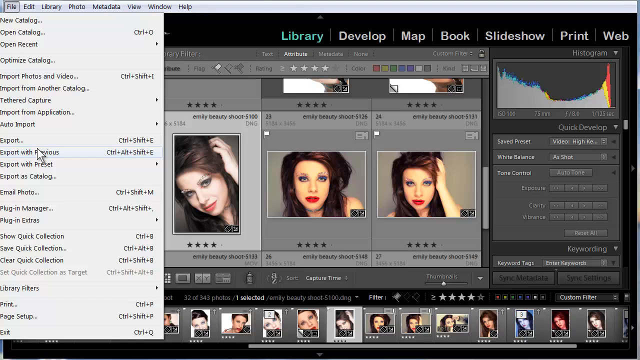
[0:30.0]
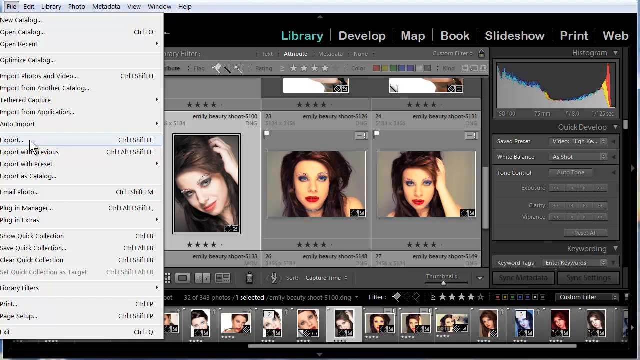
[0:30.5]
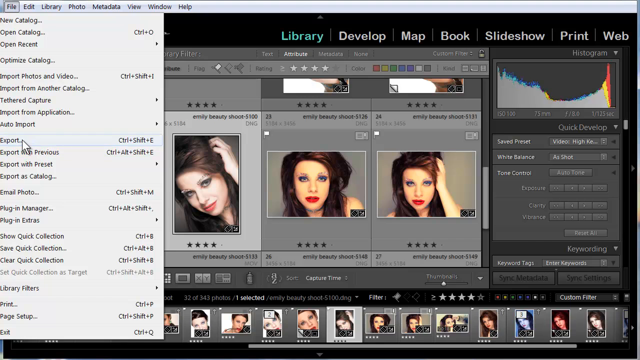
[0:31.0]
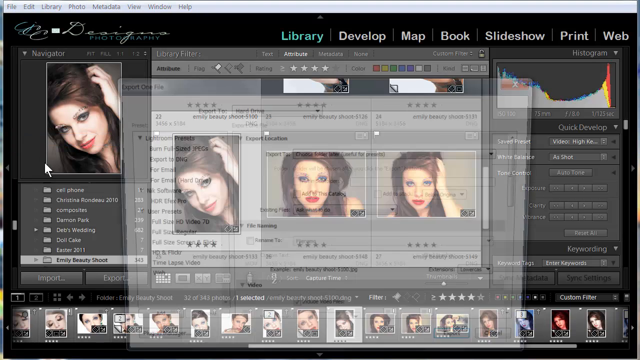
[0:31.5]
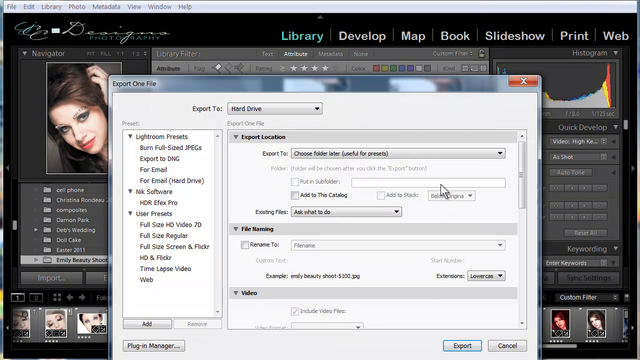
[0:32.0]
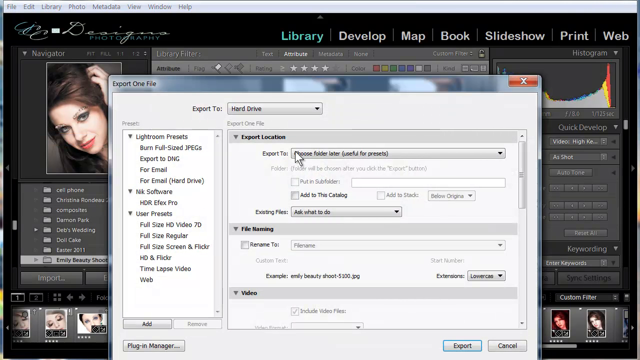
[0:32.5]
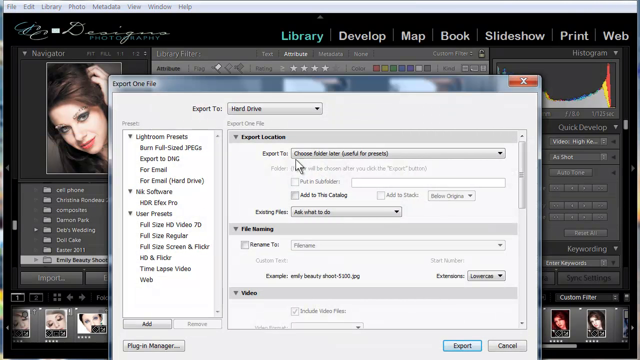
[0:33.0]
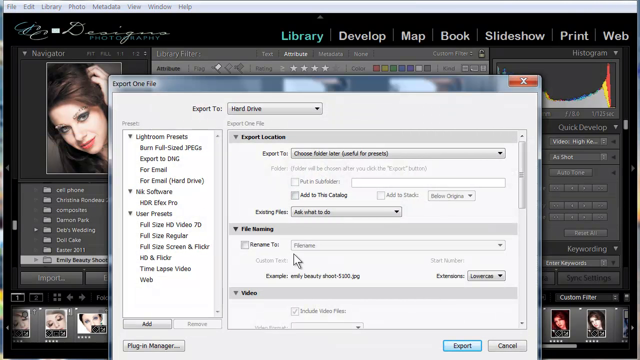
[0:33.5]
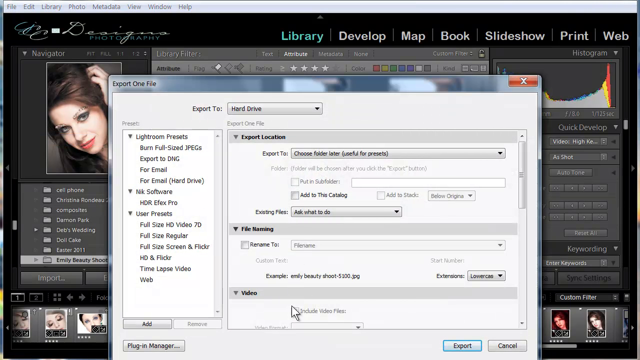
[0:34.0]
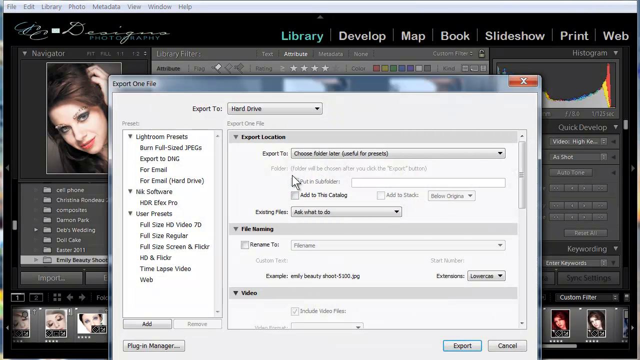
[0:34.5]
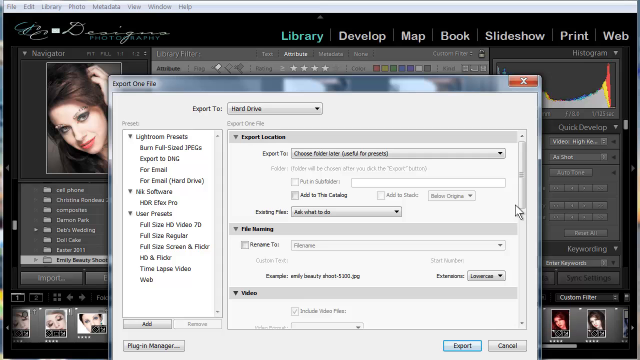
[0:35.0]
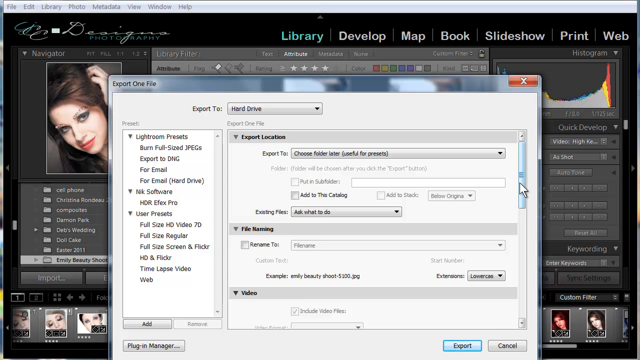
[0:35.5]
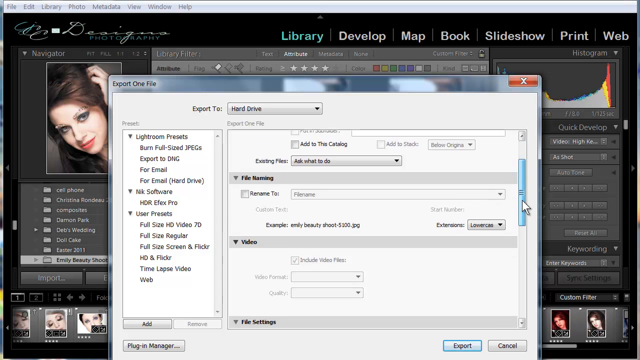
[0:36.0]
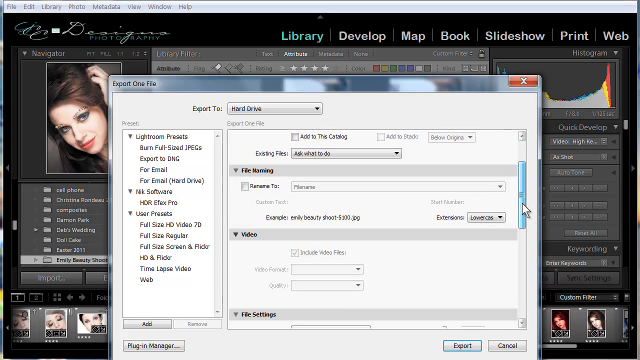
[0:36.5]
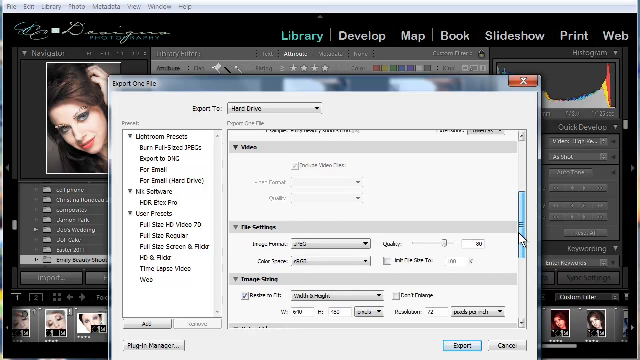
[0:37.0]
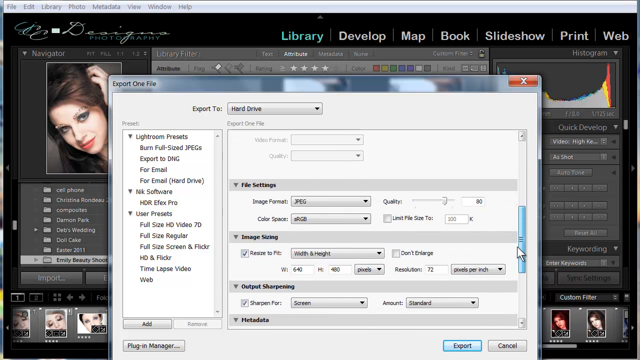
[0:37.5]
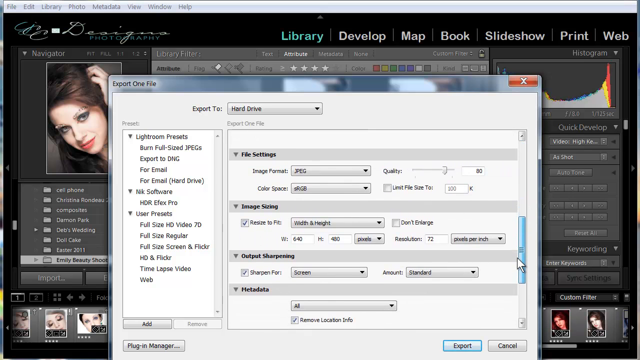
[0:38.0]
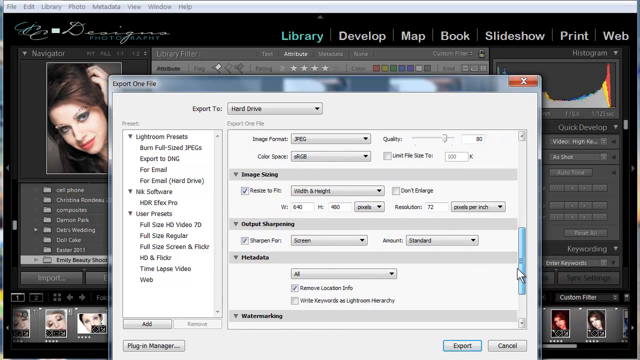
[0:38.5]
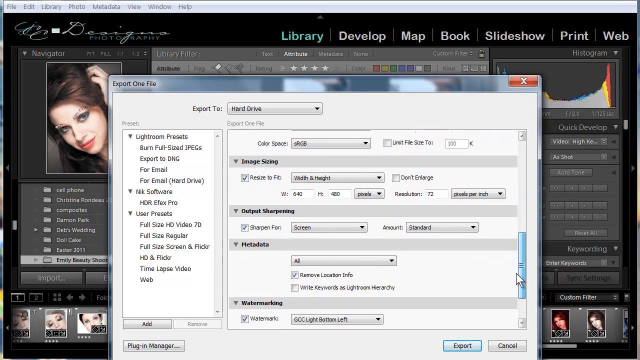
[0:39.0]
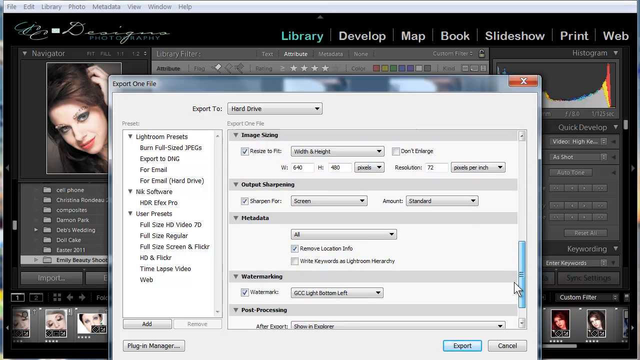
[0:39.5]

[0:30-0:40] In the photo editing software for model pictures, the user has clicked file and moves down the list of options: new catalog, open catalog, open recent, optimize catalog, import photos and video, import videos from another catalog, import from application, auto import, export and export with previews. The user clicks export and looks through a variety of export settings. The list is long enough that the user scrolls down with the scroll wheel, and the scroll area highlights blue while being scrolled. No option has been chosen yet.